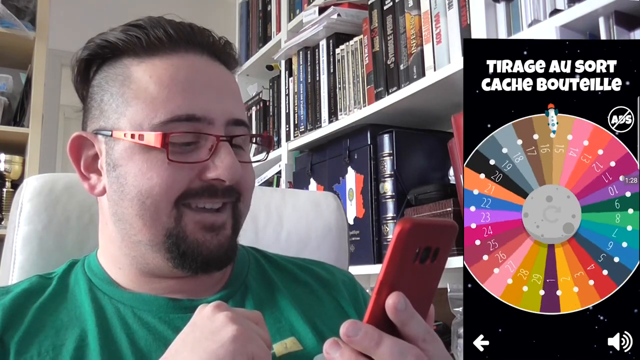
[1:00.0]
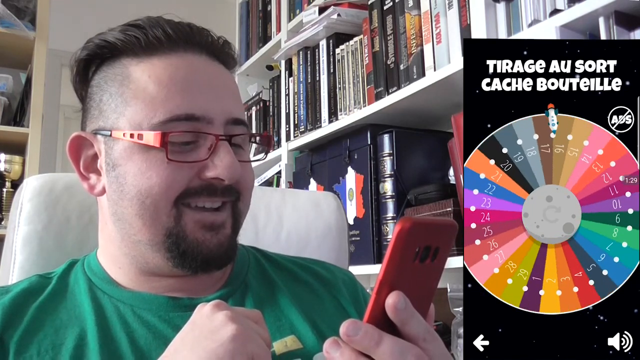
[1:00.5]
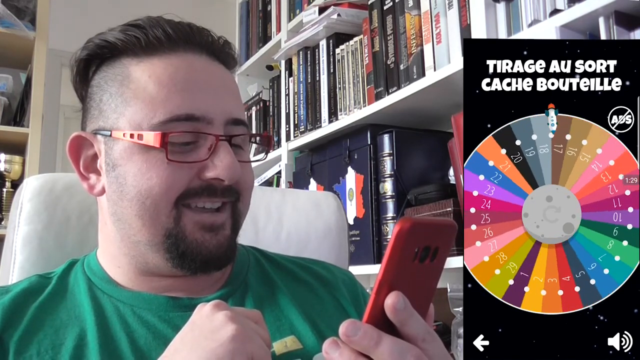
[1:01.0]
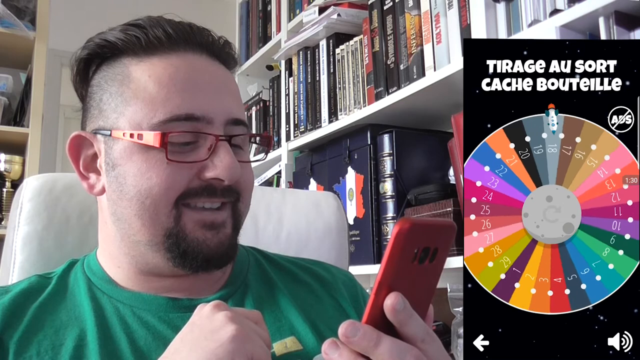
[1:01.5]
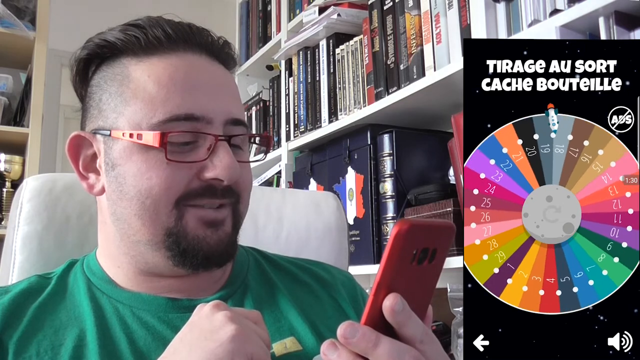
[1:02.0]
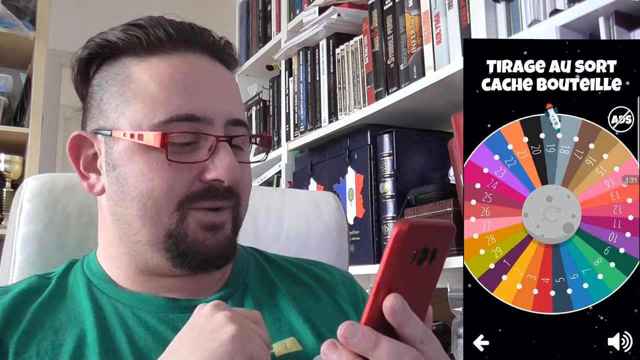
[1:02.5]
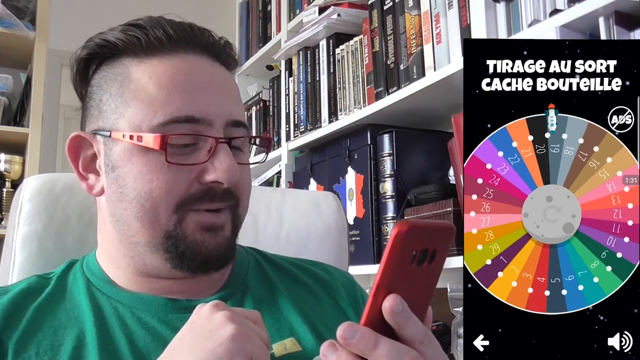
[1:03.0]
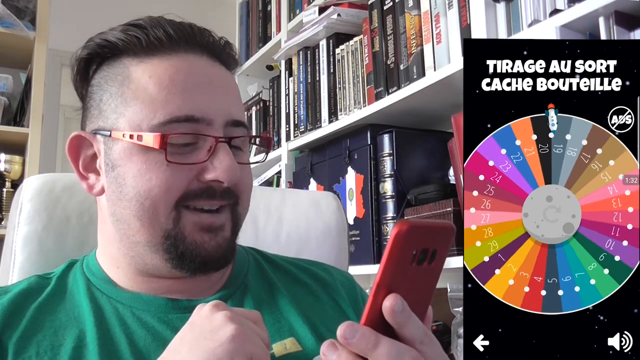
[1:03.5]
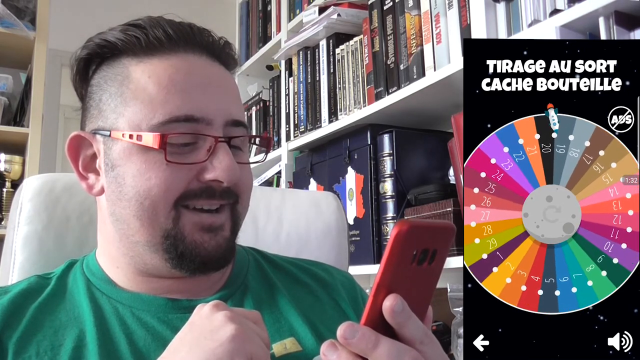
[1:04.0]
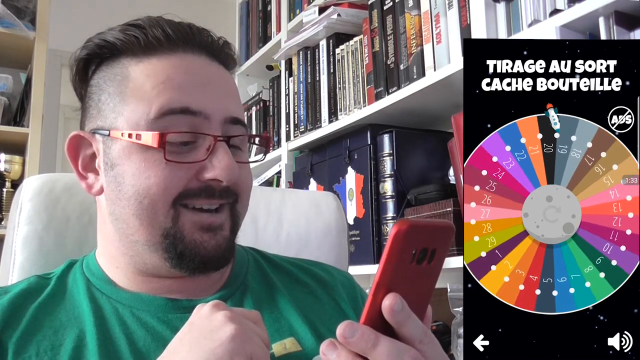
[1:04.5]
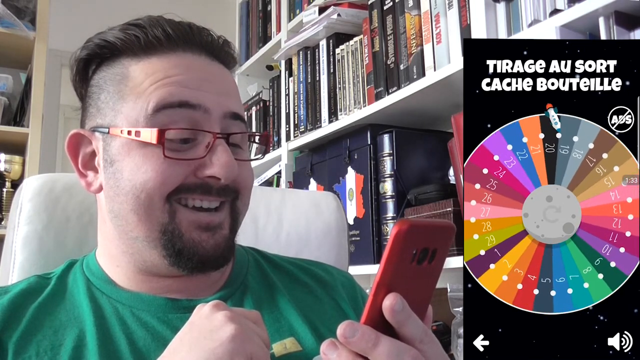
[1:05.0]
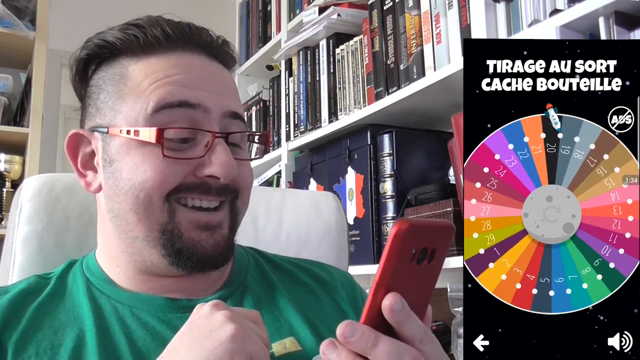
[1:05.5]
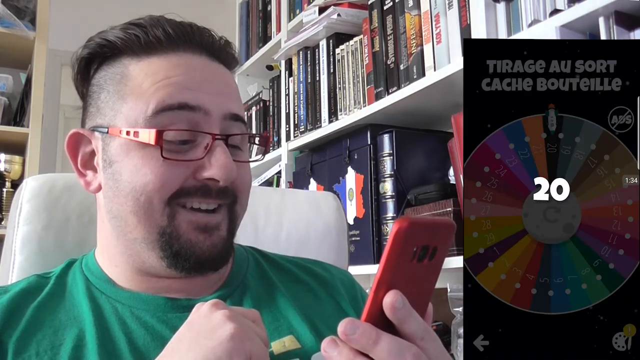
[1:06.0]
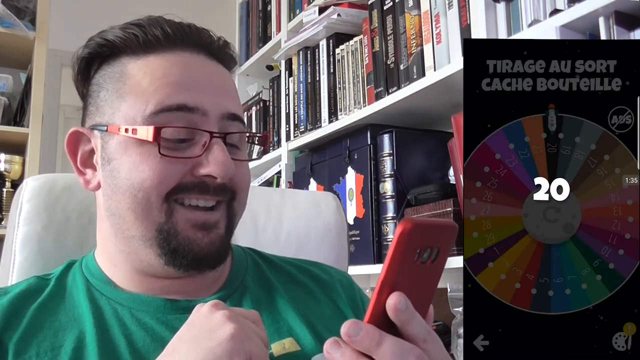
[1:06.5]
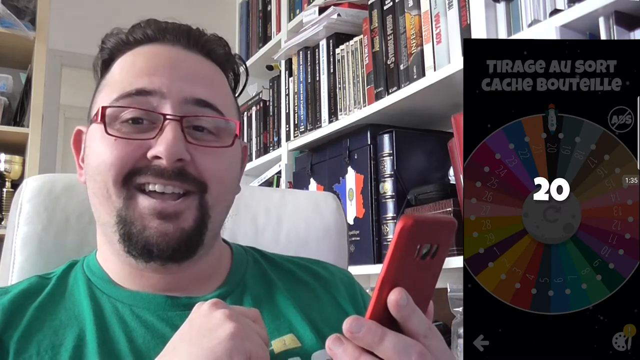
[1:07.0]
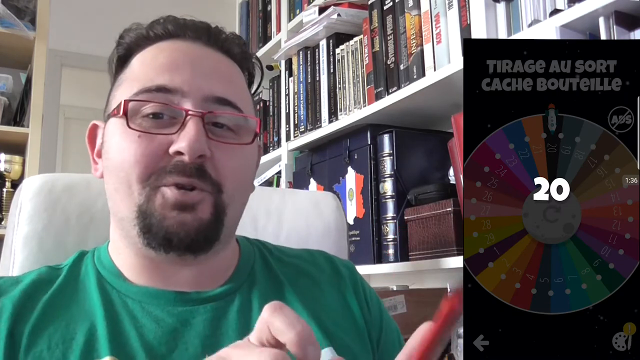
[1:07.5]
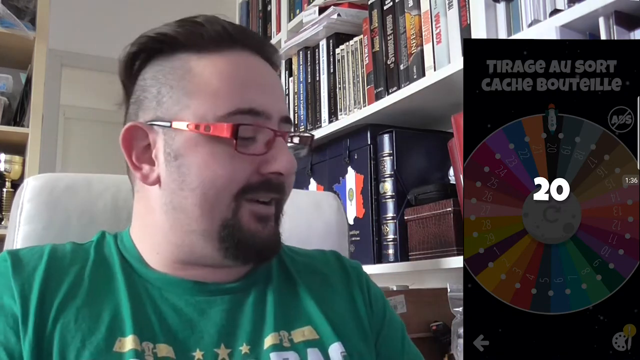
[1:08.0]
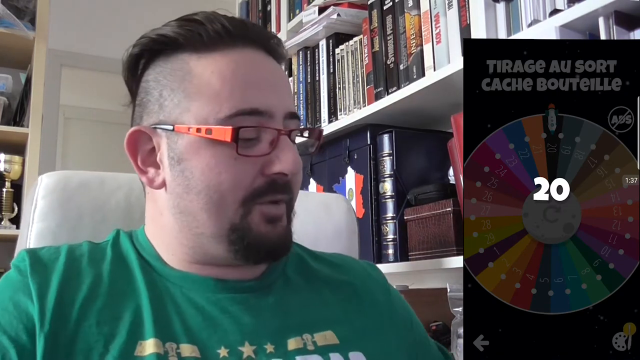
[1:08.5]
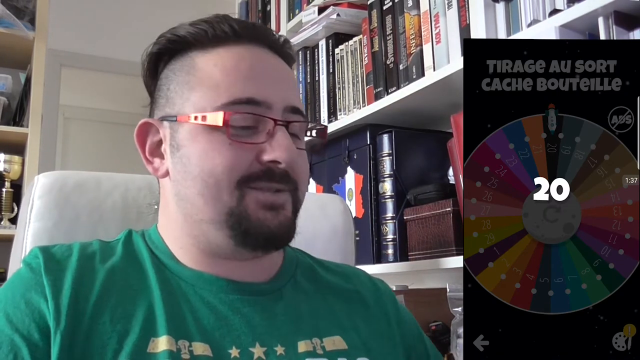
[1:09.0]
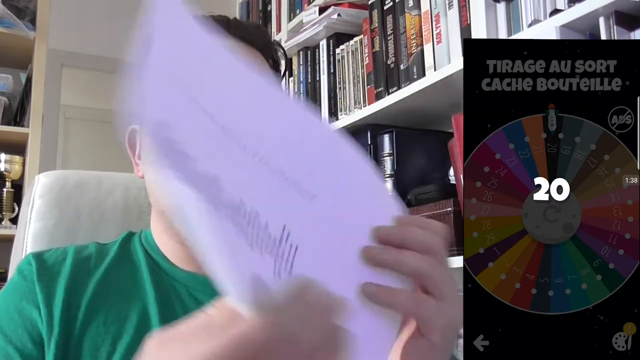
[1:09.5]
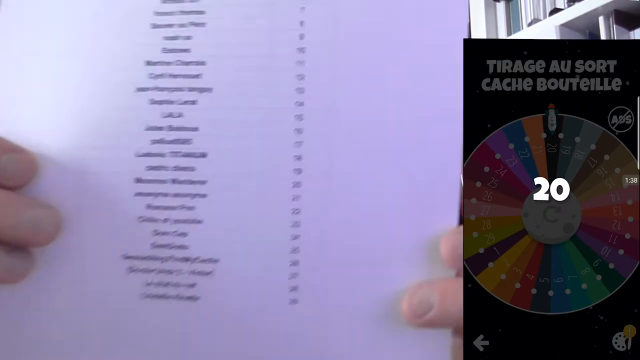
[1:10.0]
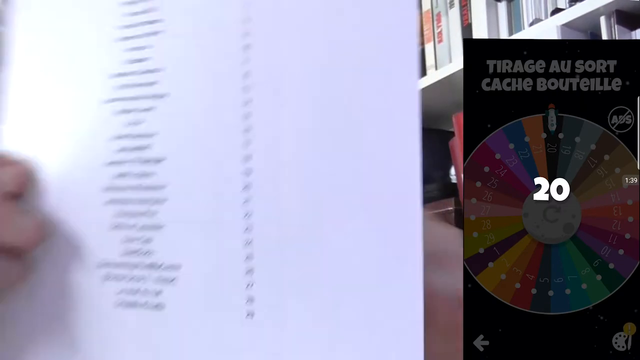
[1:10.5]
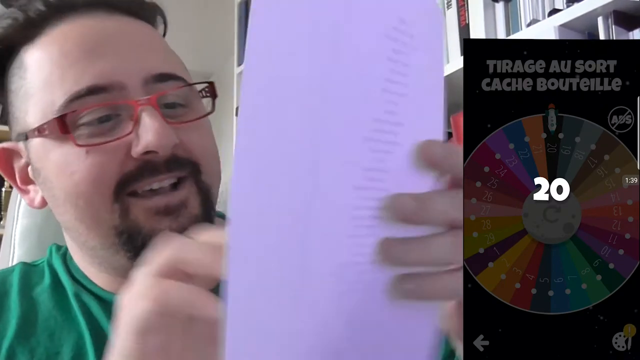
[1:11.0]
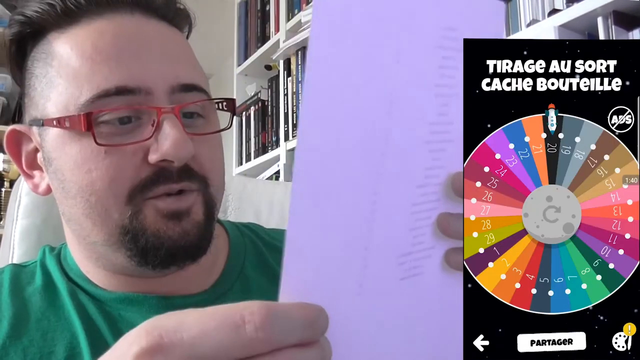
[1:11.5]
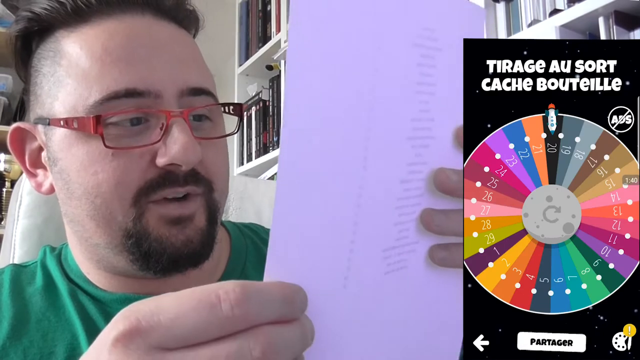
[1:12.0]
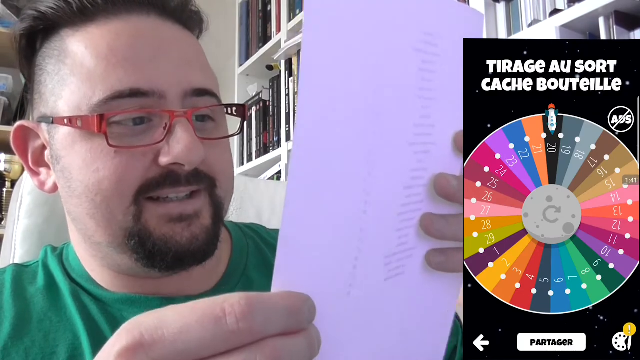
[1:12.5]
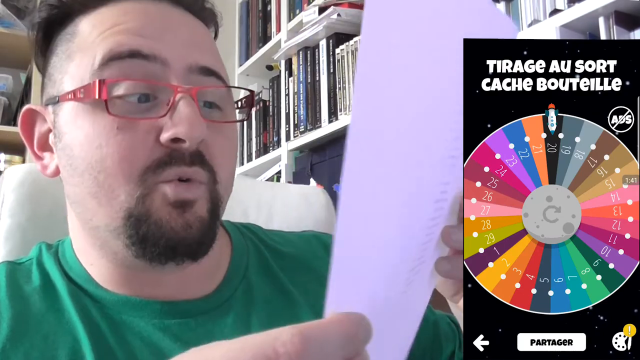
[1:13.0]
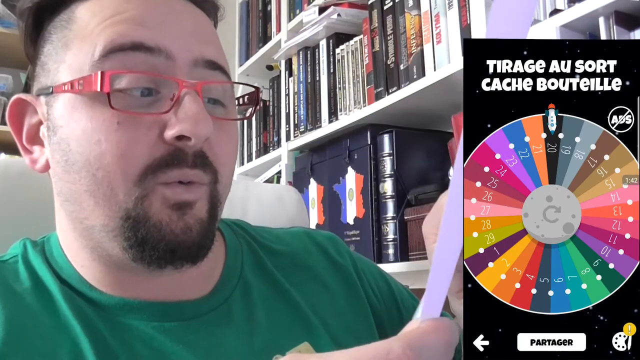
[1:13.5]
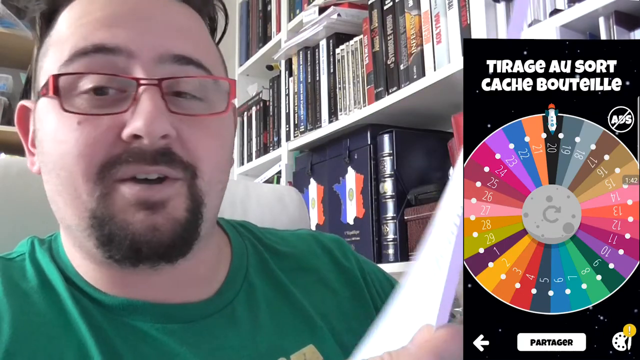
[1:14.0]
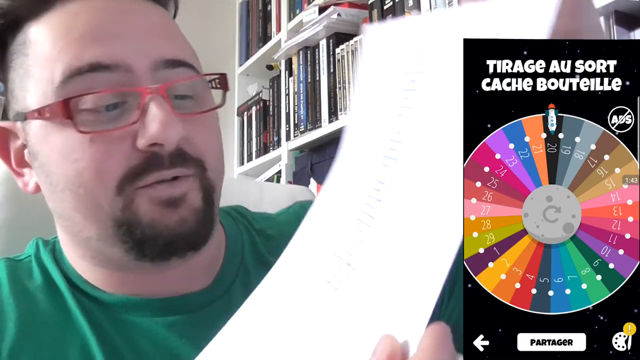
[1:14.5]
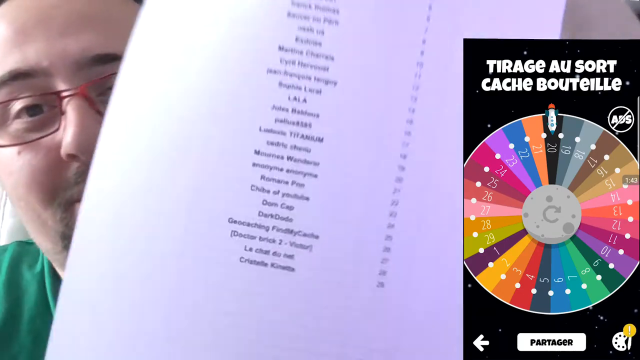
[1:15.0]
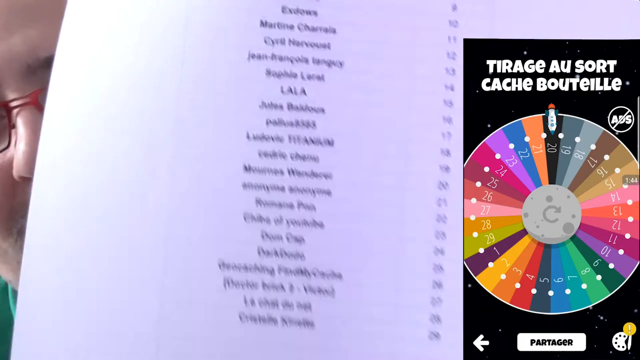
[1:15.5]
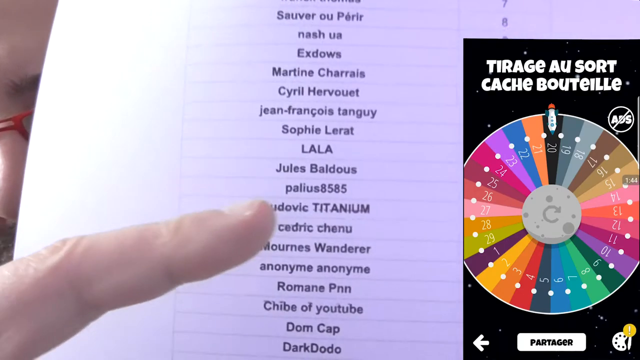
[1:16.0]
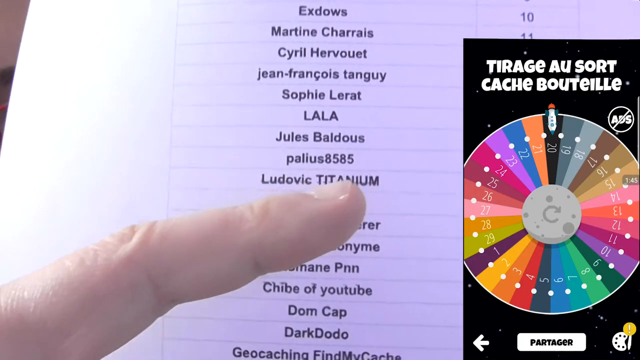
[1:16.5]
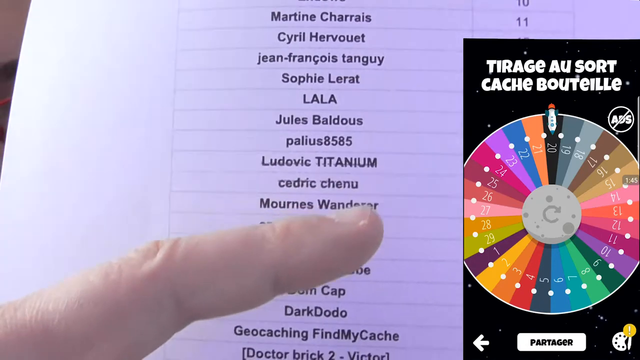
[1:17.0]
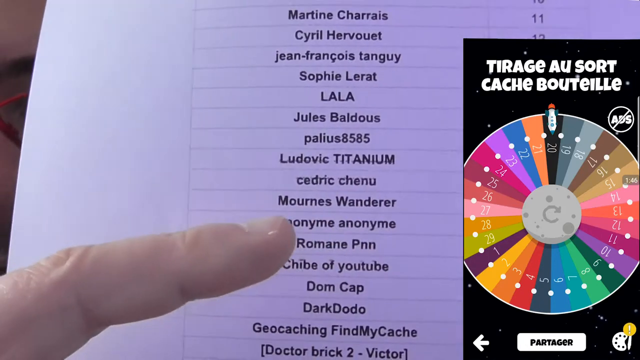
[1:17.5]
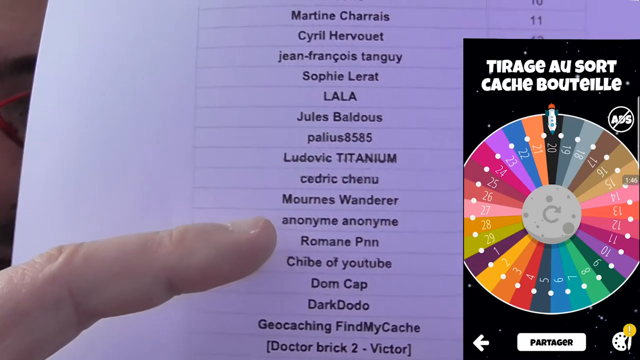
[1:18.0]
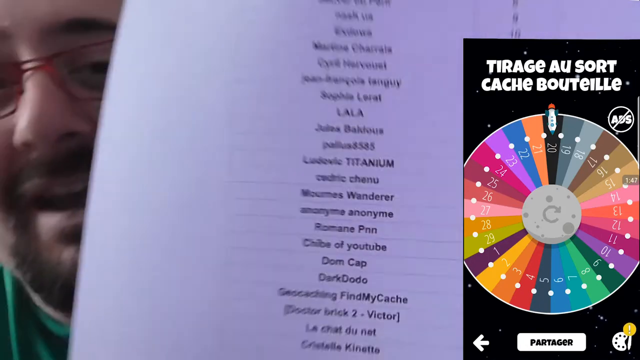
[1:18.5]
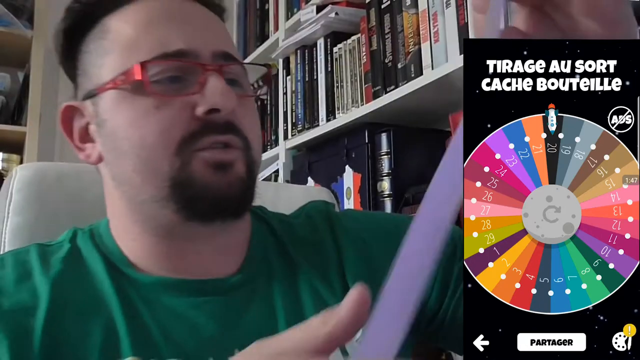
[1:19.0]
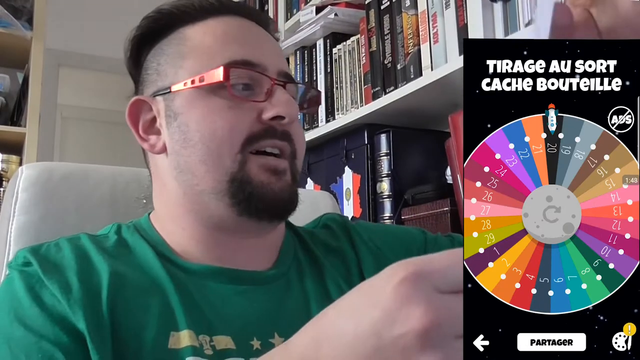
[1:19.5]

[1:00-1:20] Something picks the color he will use for his design, and it lands on 20, which is black. He then shows his paper explaining how the whole process works, showing what each color number means.